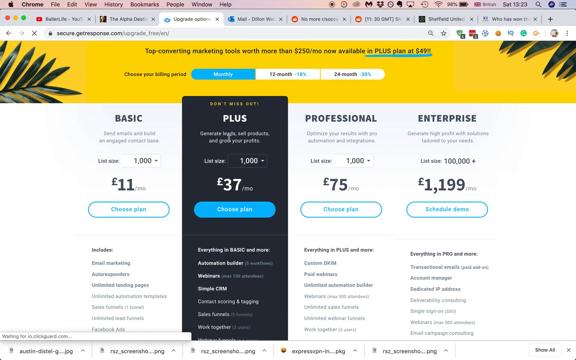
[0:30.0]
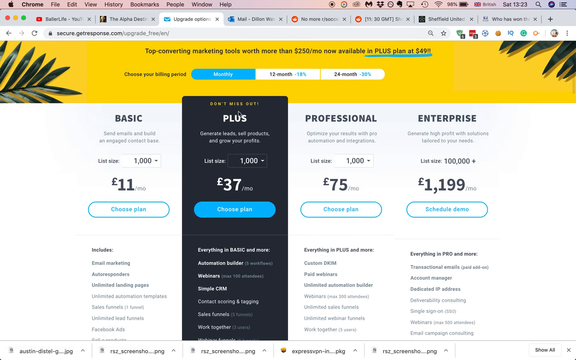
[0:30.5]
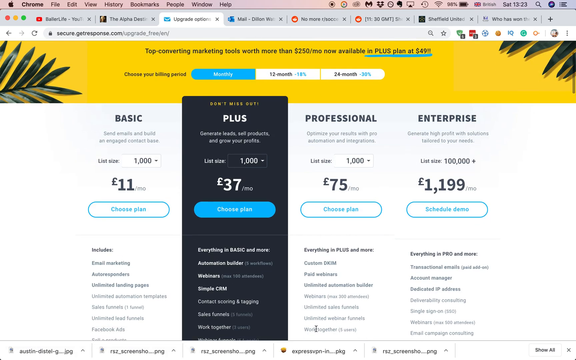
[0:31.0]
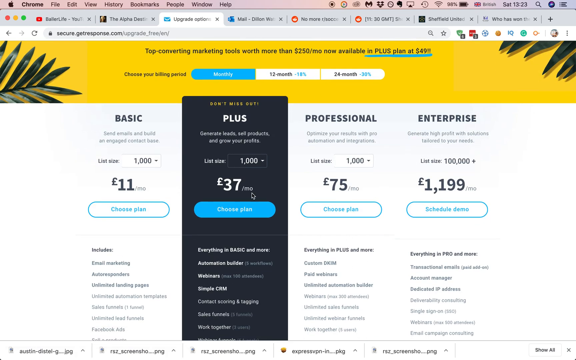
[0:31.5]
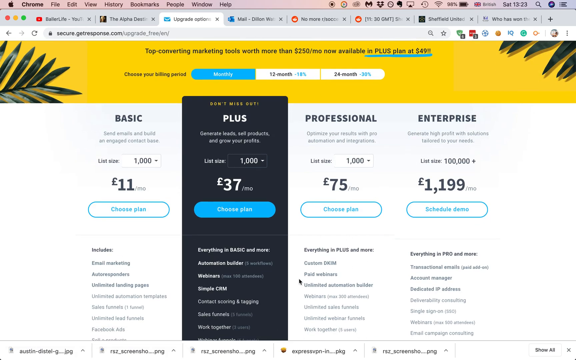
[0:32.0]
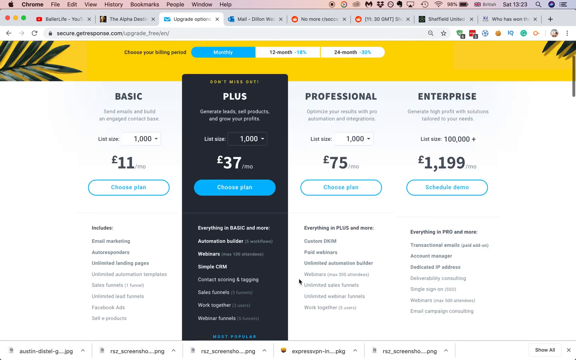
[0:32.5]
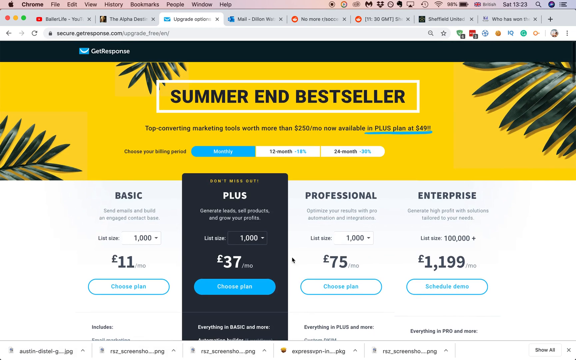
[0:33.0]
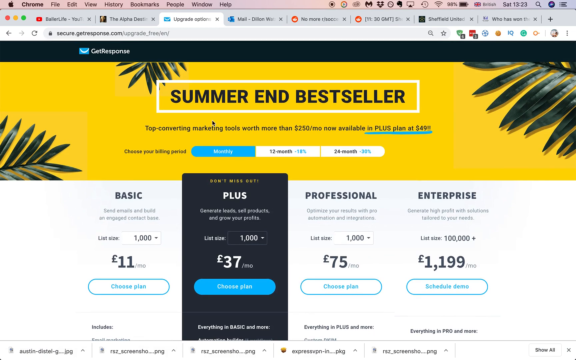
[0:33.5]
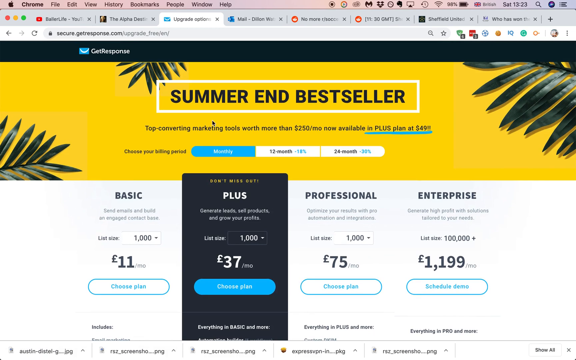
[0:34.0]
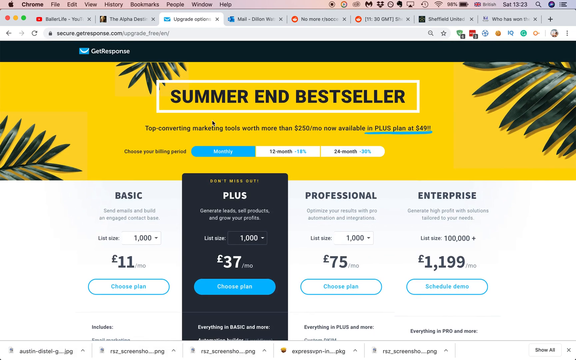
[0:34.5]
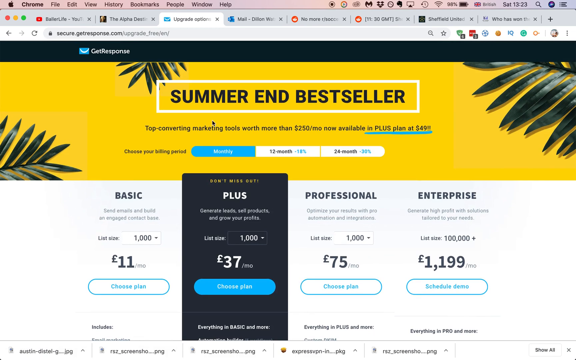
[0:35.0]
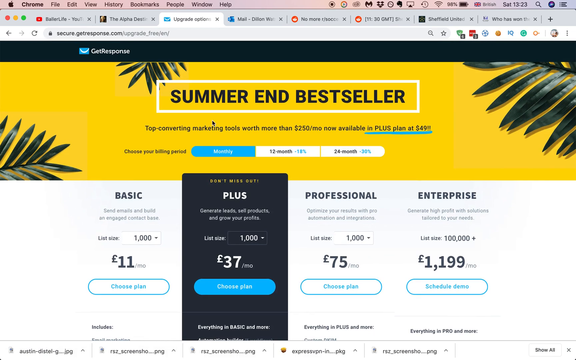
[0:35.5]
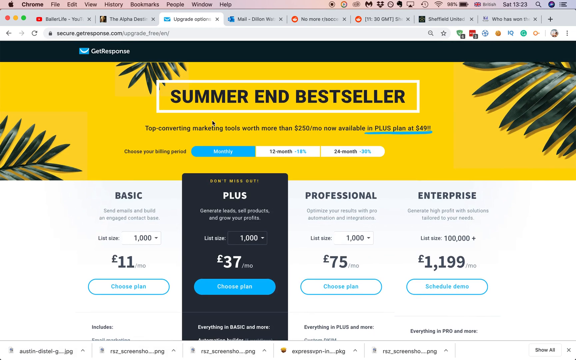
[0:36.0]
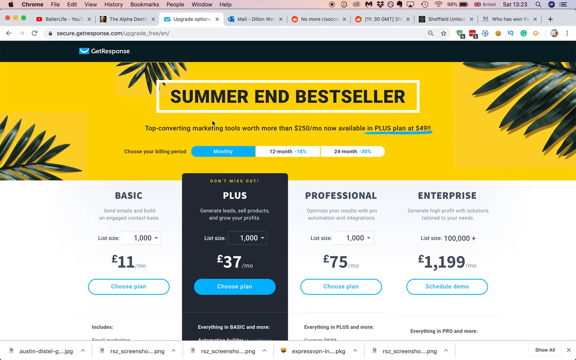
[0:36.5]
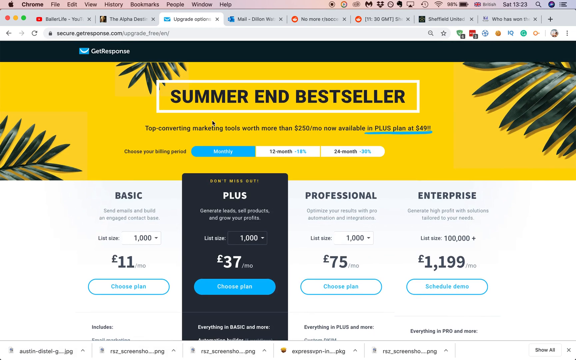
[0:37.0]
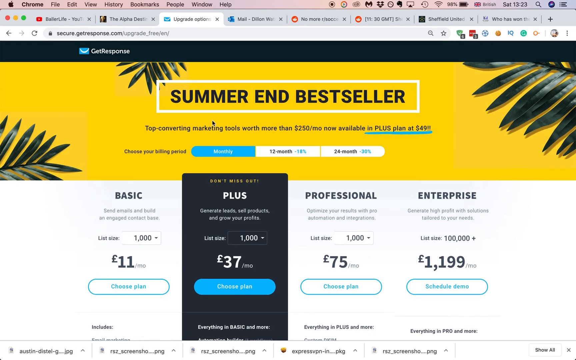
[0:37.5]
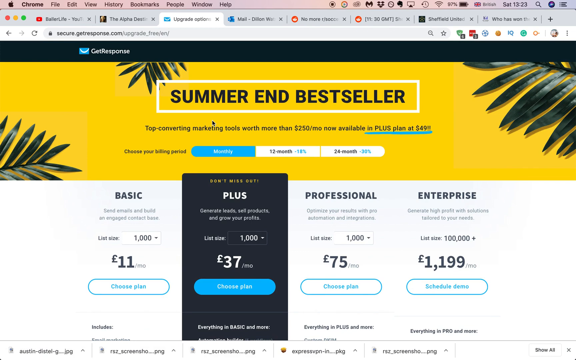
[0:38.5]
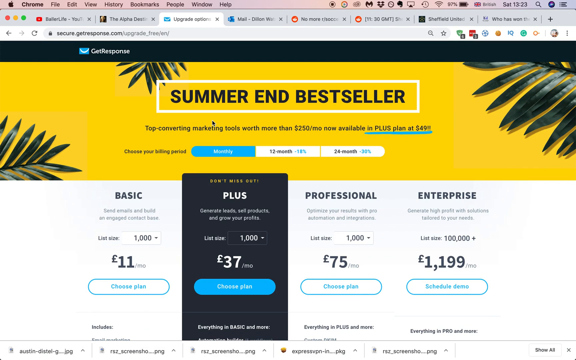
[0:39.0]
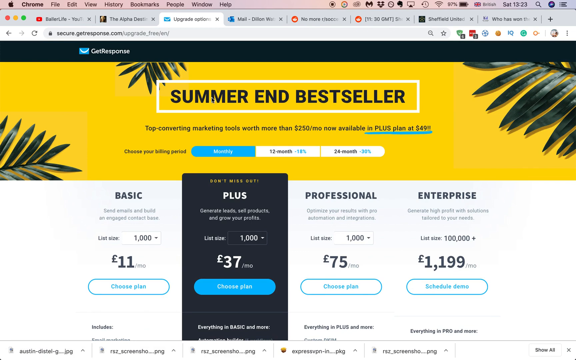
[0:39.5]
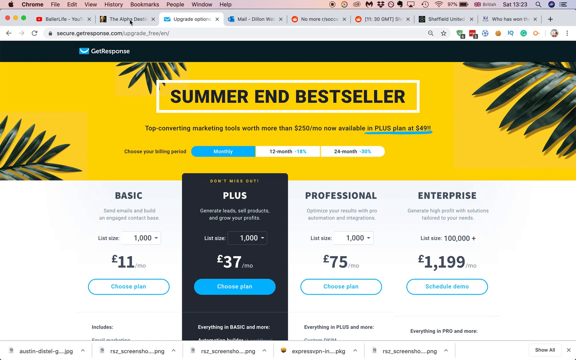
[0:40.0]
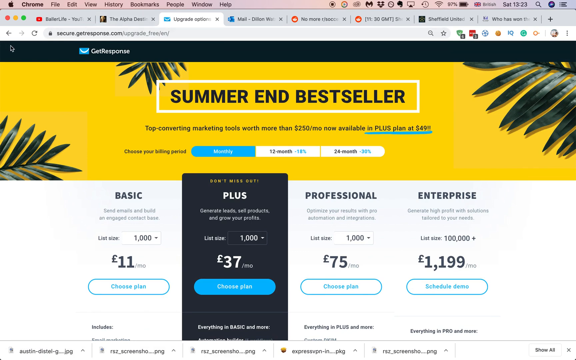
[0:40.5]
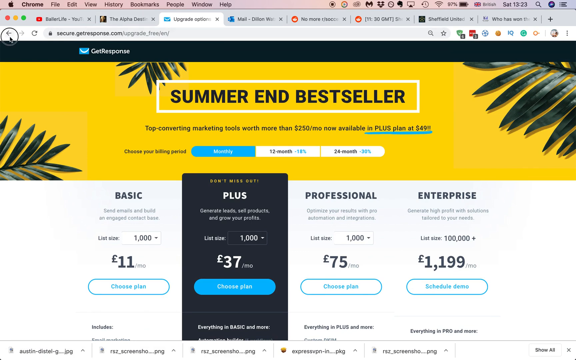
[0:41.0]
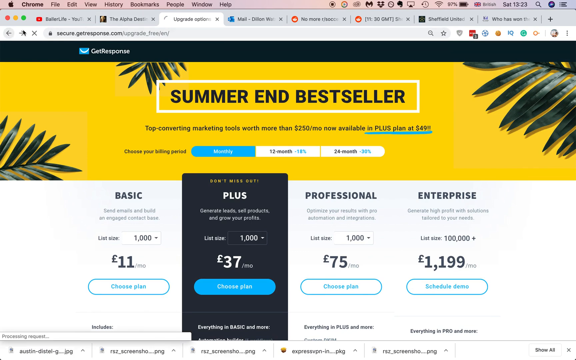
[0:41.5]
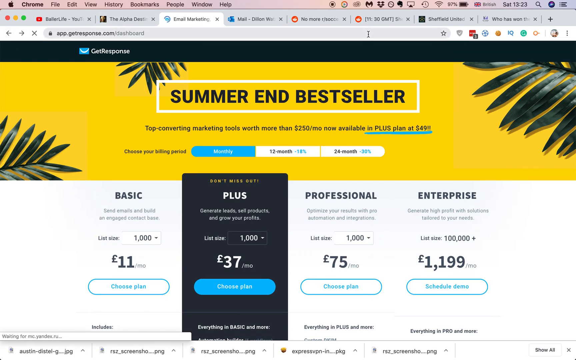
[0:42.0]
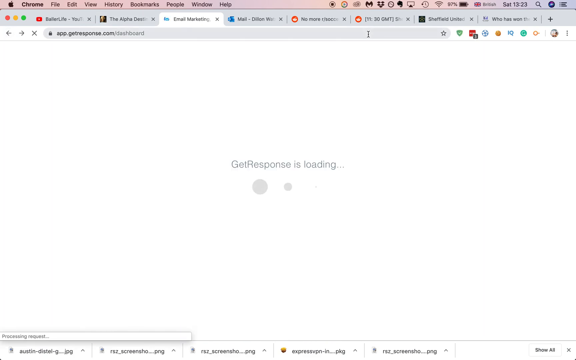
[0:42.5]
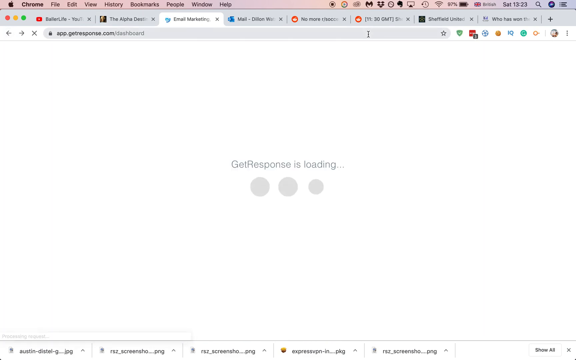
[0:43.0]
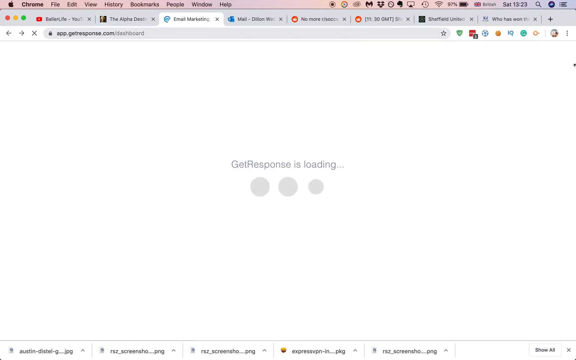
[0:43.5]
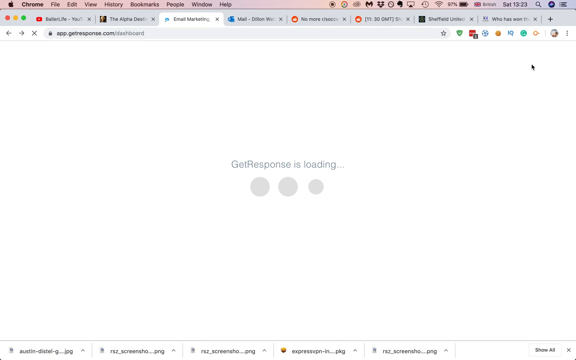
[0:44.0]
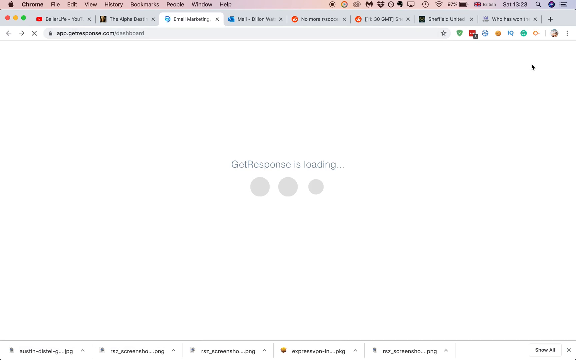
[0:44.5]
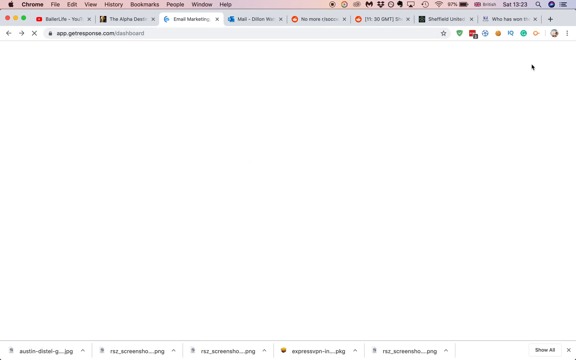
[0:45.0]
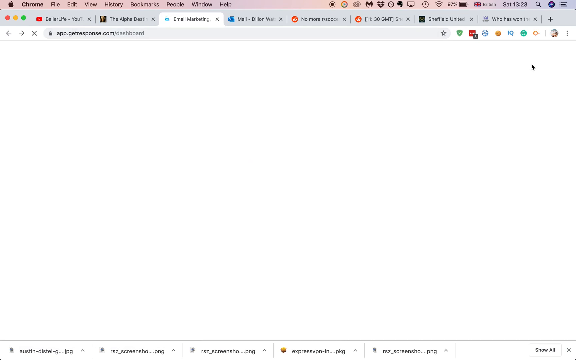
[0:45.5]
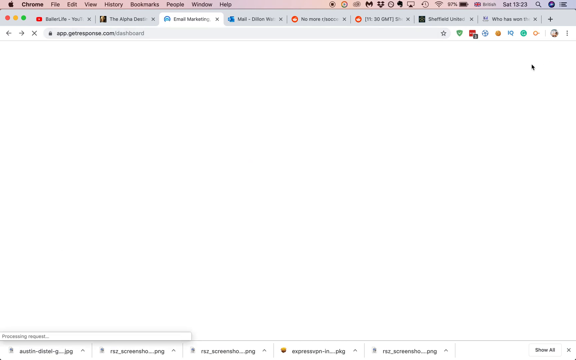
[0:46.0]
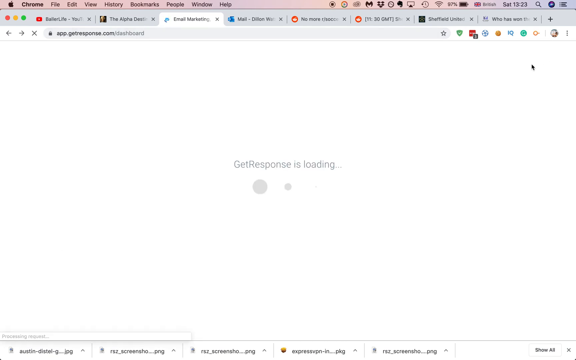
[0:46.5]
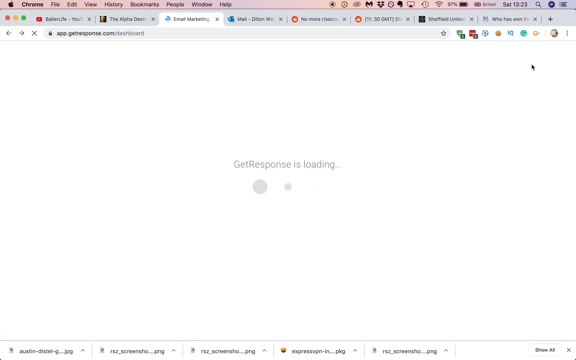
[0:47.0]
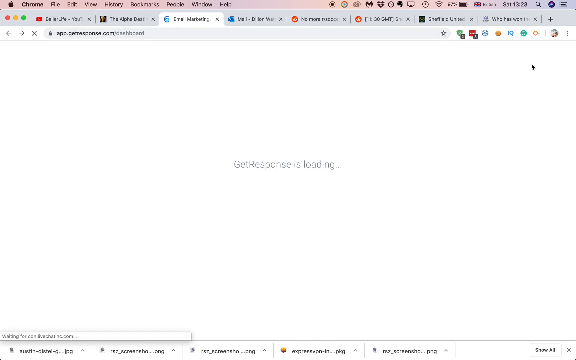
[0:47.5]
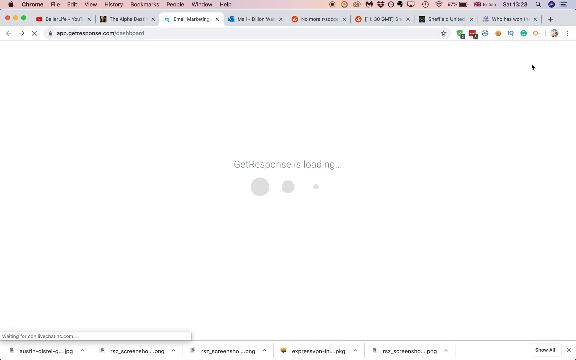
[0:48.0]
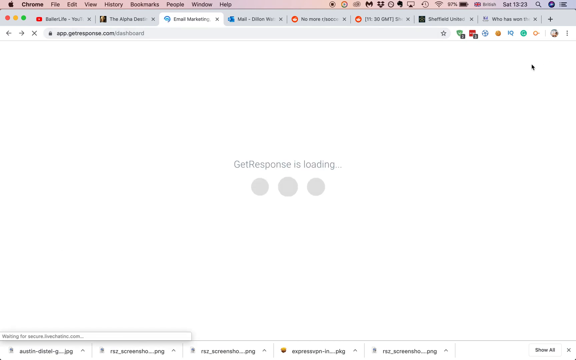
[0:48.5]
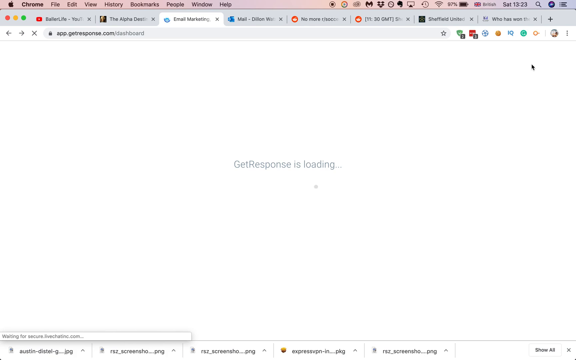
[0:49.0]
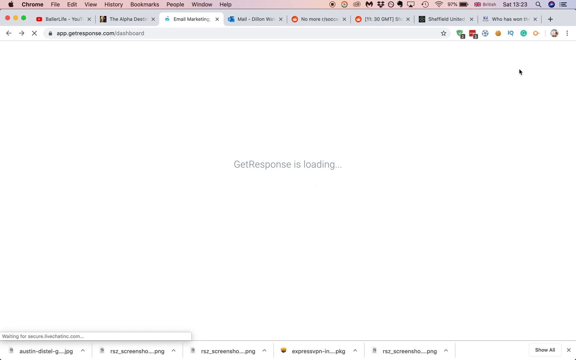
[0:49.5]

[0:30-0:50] The new screen shows four subscription plans in panel form. One plan, labeled "Basic", costs £11 a month. Another, labeled "Plus", is in a dark gray column while the other three columns are white; it costs 37 pounds a month. A plan labeled "Professional" costs 75 pounds a month, and one labeled enterprise costs 1,199 pounds a month. The user scrolls down and circles the cursor around all four subscription plans a few times, briefly. The user then clicks the back button on the website, and a white loading screen appears with only the words "GetResponses Loading..."